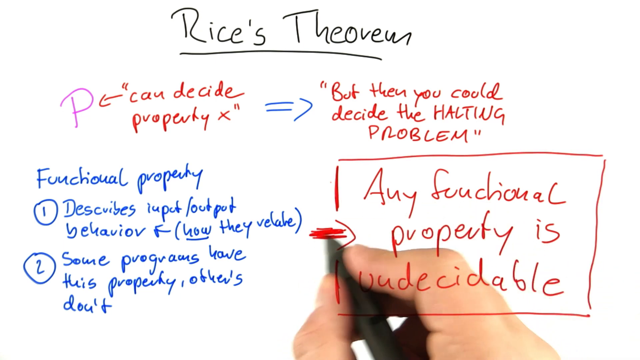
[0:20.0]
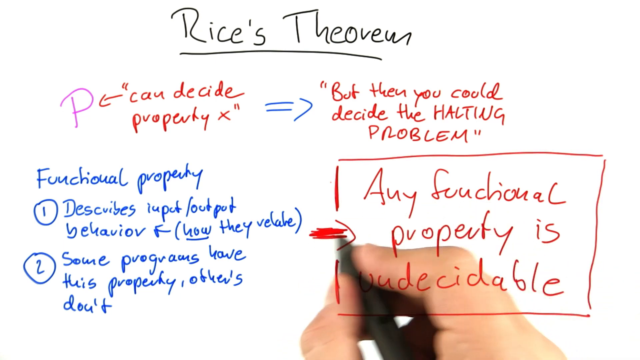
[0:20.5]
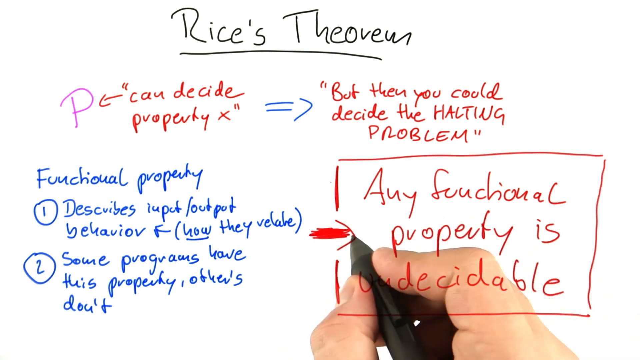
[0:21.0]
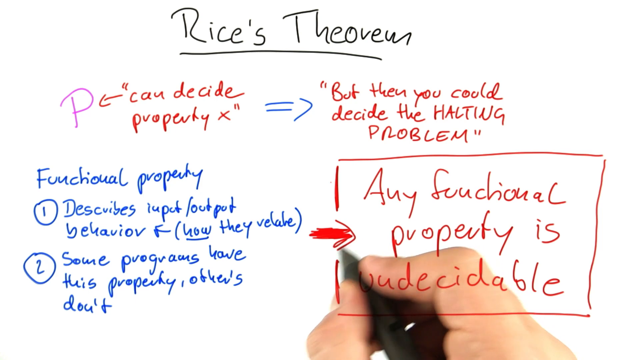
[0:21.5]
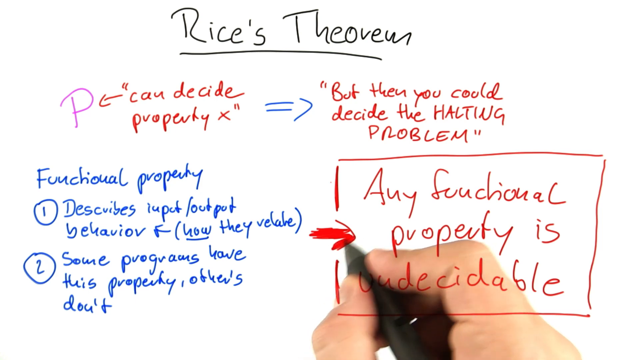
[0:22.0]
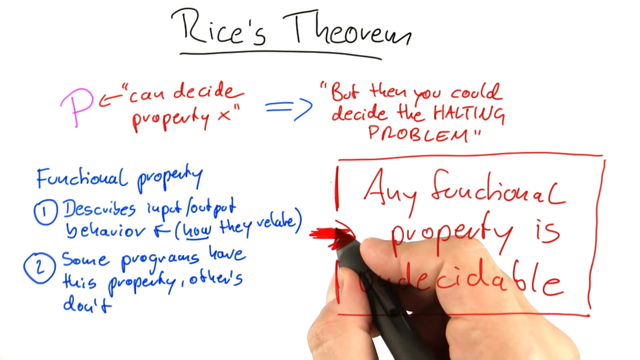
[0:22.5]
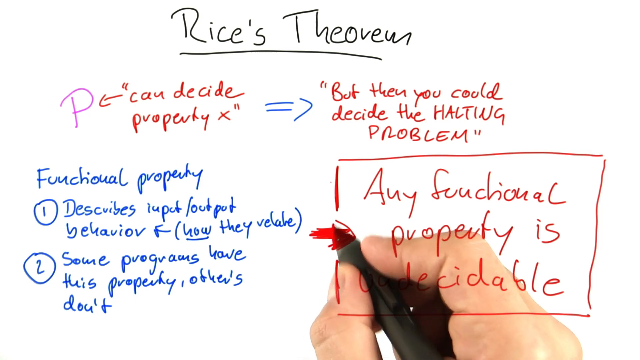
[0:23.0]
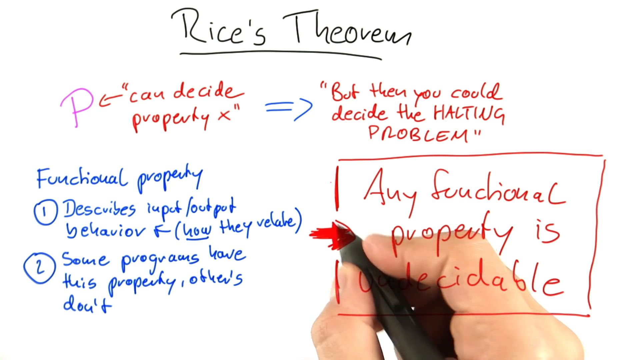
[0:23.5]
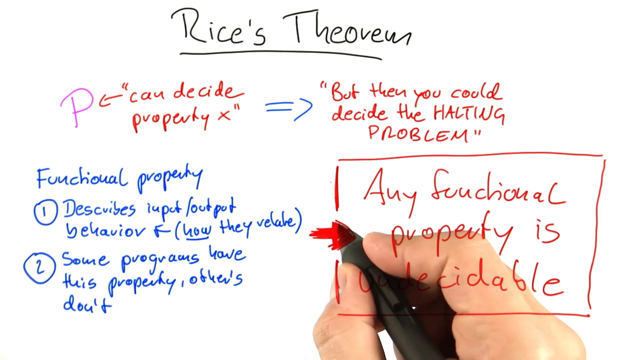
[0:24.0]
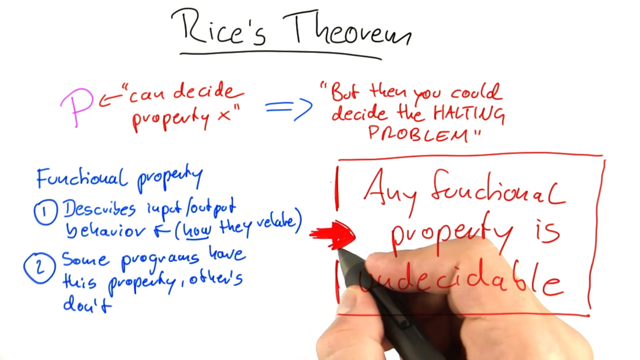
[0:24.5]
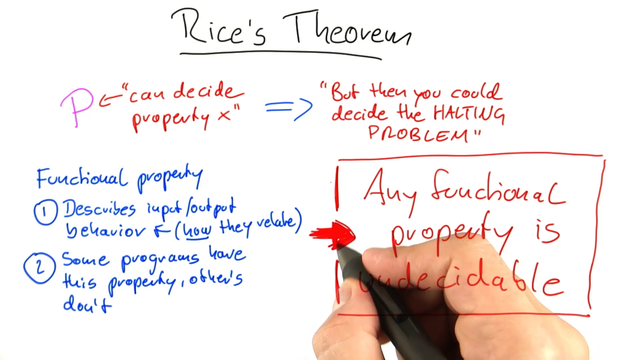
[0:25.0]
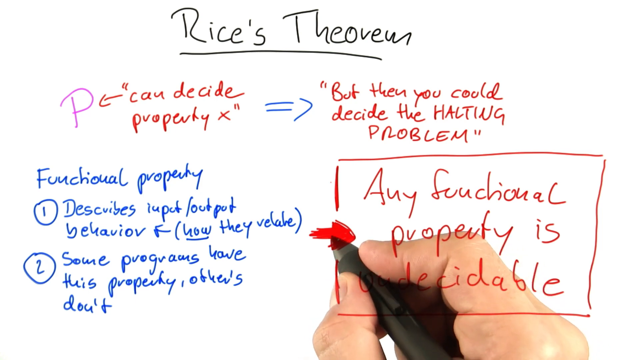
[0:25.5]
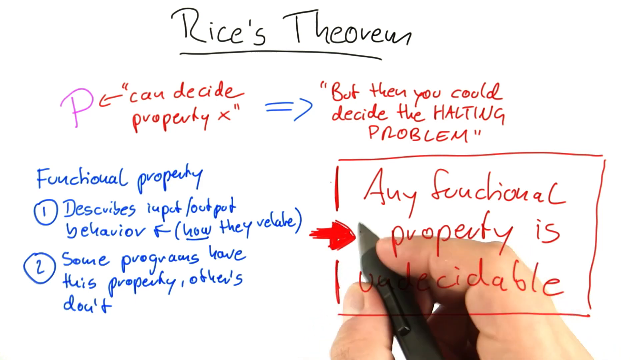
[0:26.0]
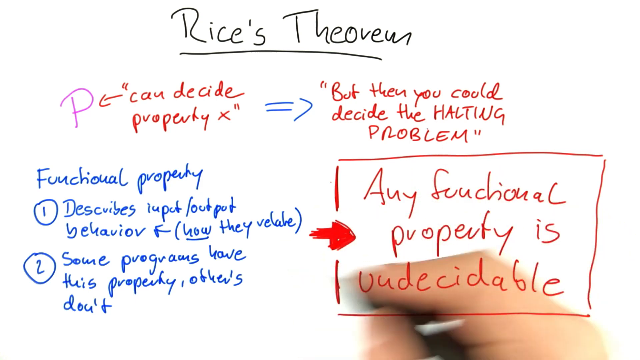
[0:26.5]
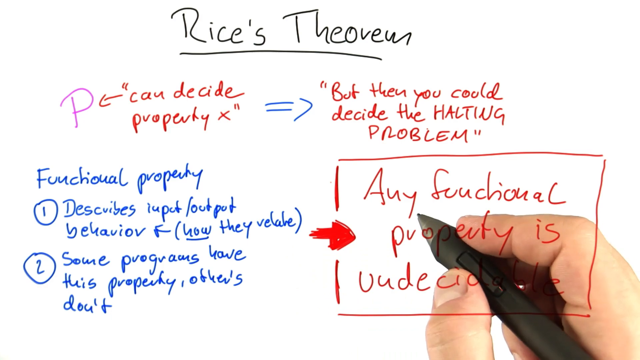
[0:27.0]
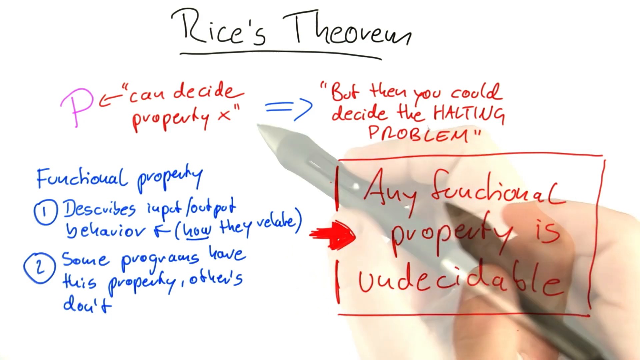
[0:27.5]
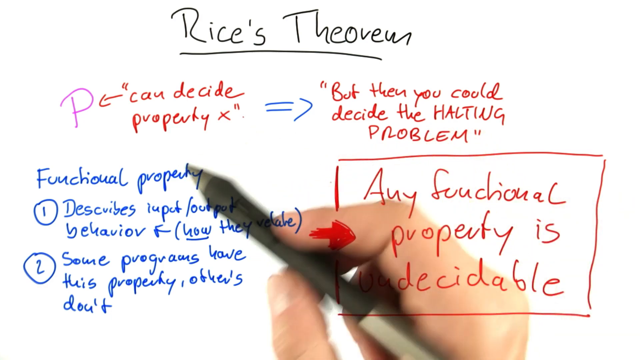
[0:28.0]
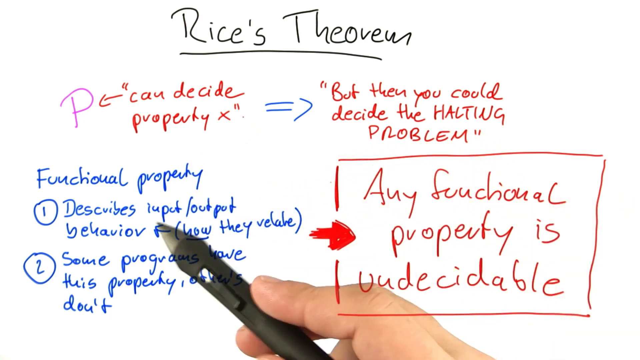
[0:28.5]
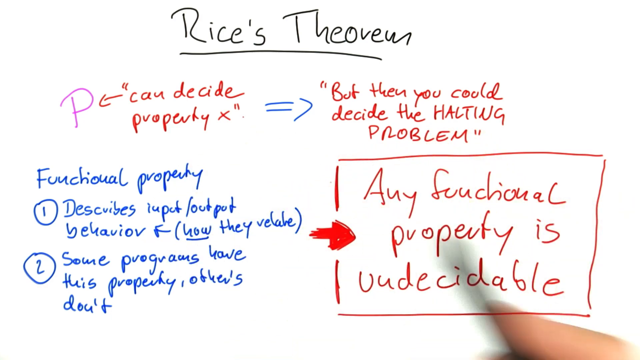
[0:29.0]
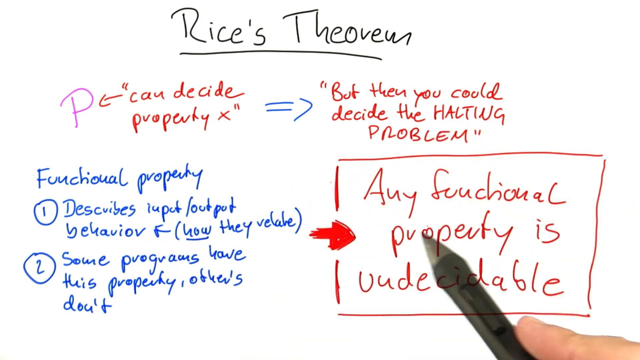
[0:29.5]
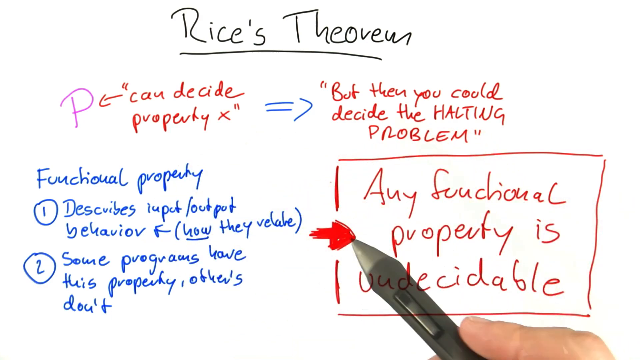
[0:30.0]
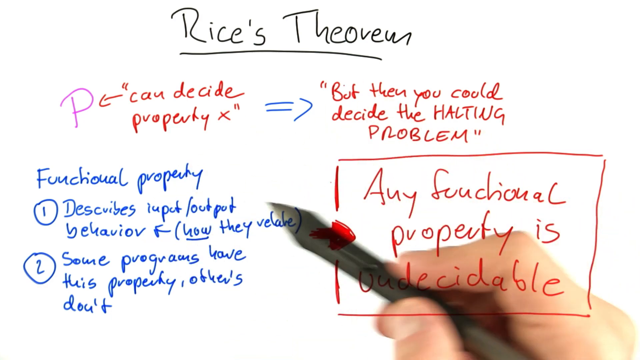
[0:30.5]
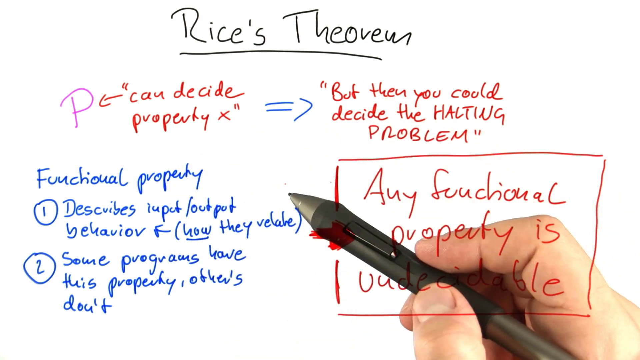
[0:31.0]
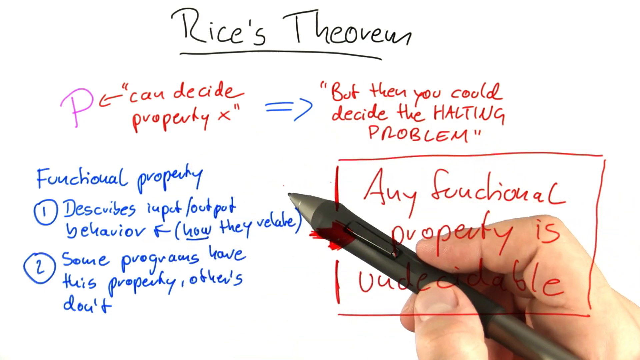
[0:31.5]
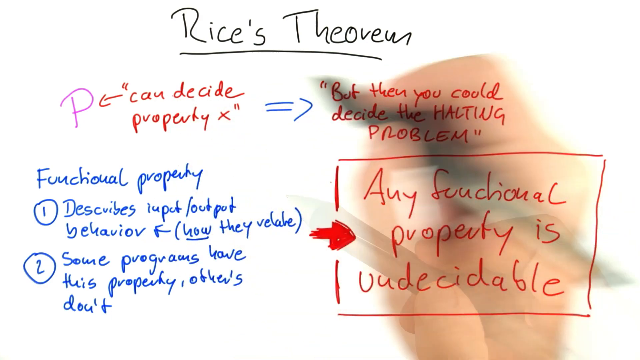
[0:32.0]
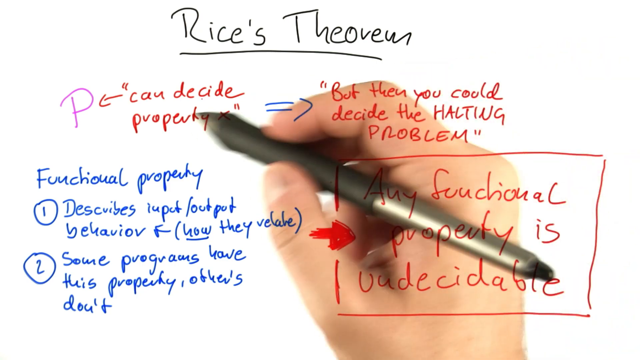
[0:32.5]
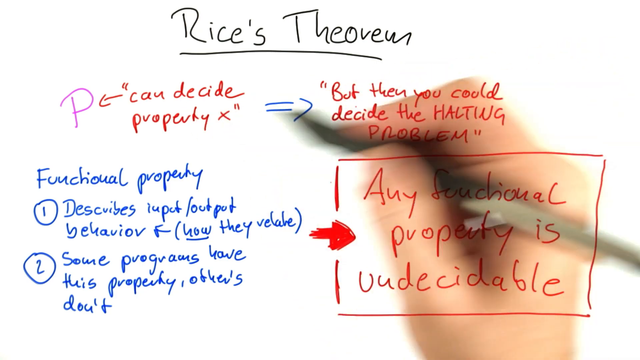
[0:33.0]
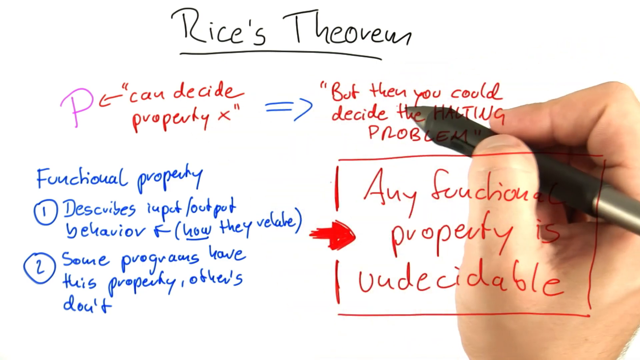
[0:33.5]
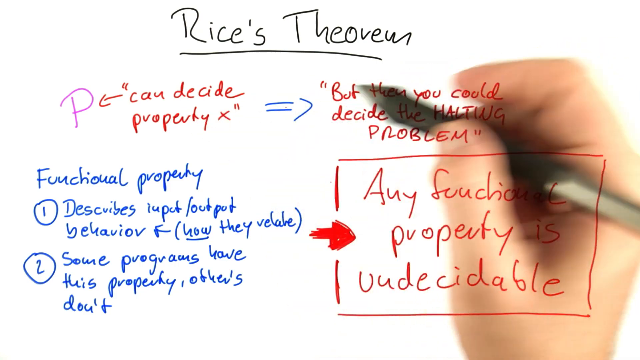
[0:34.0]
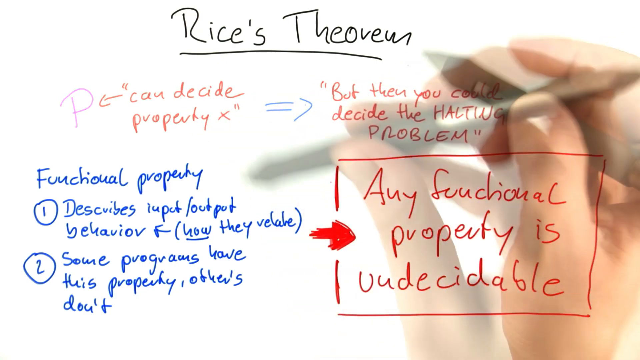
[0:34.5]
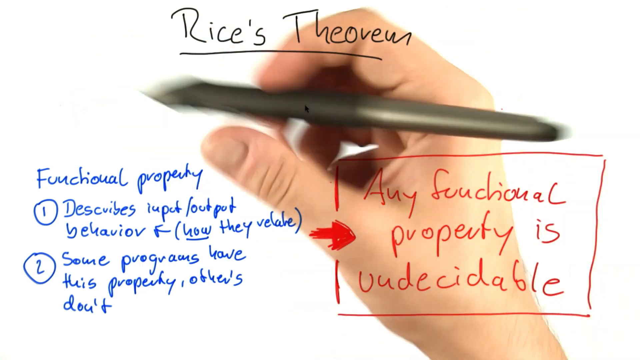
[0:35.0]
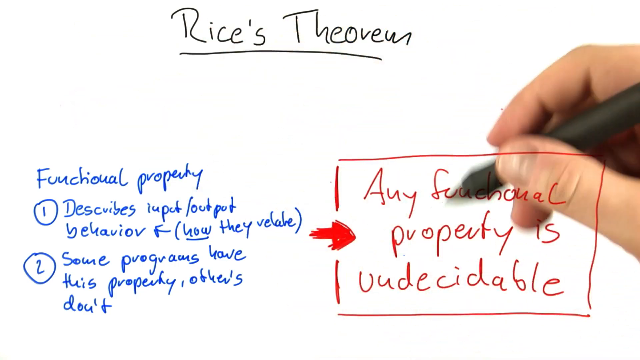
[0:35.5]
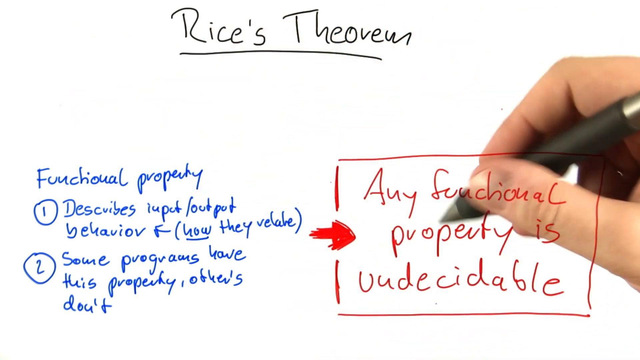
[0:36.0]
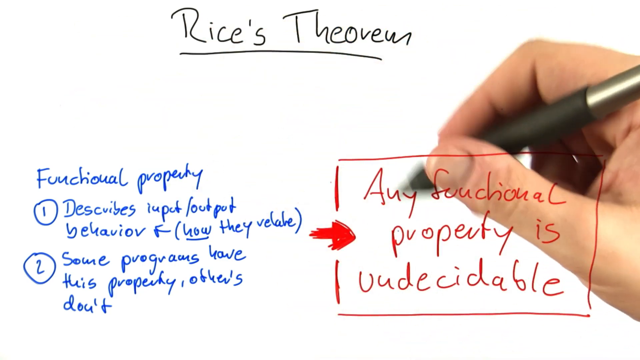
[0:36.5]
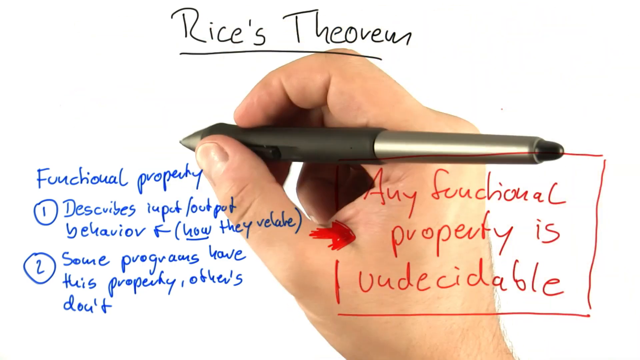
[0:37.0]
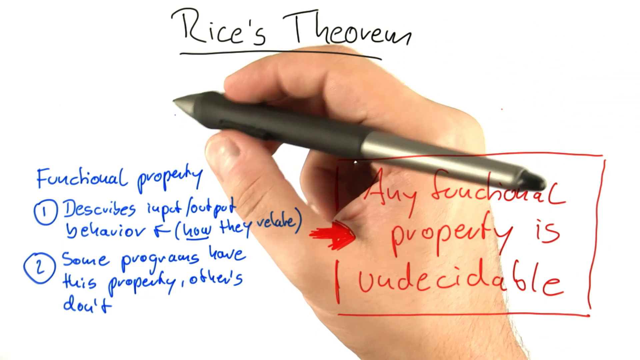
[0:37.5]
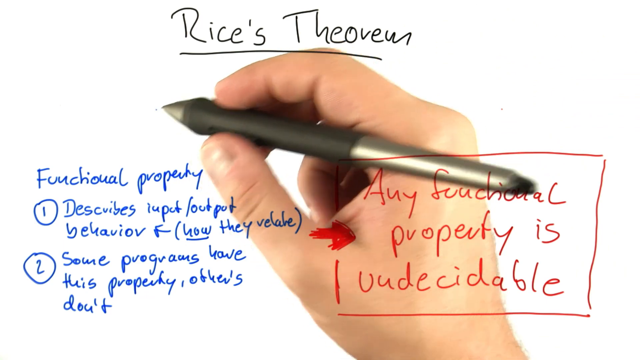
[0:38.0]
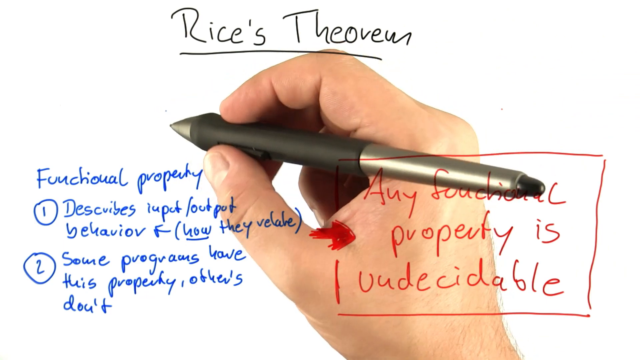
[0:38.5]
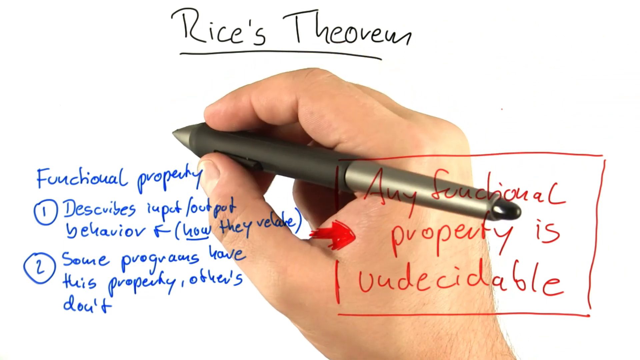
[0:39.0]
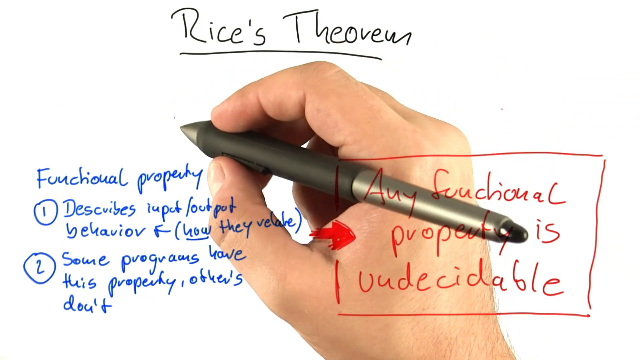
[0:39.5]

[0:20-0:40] Black text on a white background says "Rice's Theorem," alongside red, blue and purple text. A purple P has a red arrow pointing to it with red text in quotation marks that says "can decide property x," and a blue arrow points to red text in quotation marks that says "but then you could decide the halting problem." Blue text says "functional property 1 describes input output behavior how they relate and 2 some programs have this property and others don't." A red box contains red text that says "any functional property is undecidable." A man scribbles red lines, making an arrow pointing to the box, then moves the pen over to the blue text and back to the box. He moves his hand over some of the text, erases the text at the top, and gets ready to write something in the empty space at the top.